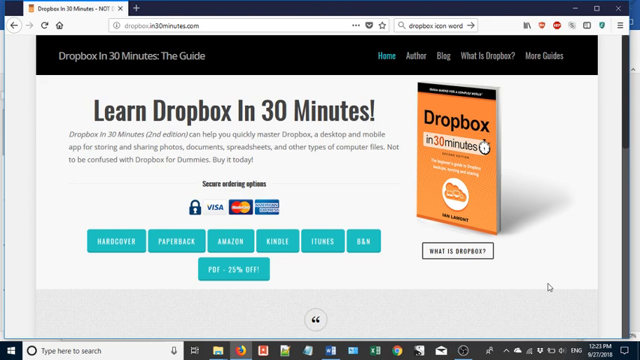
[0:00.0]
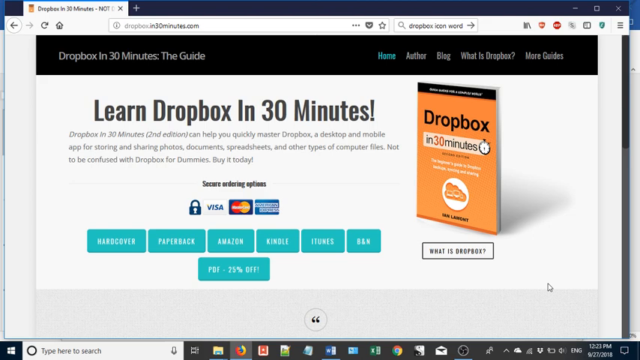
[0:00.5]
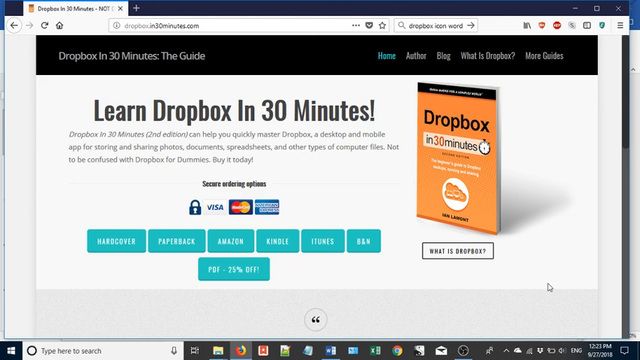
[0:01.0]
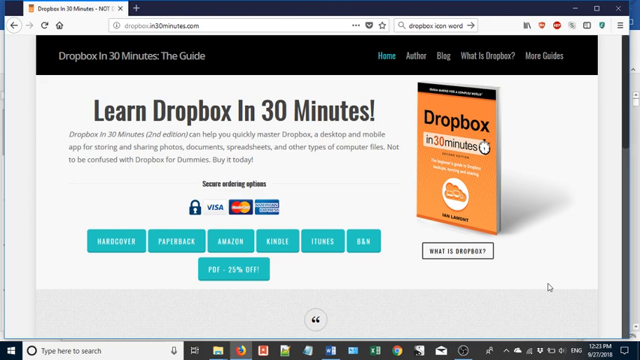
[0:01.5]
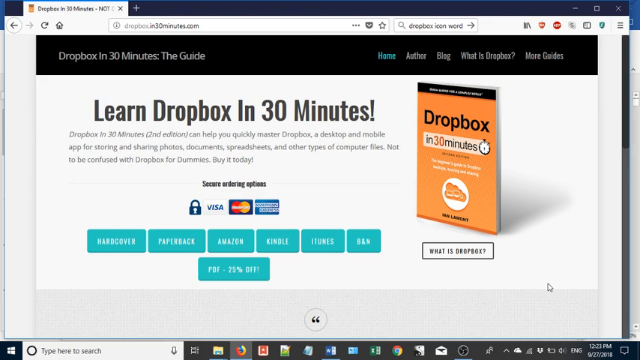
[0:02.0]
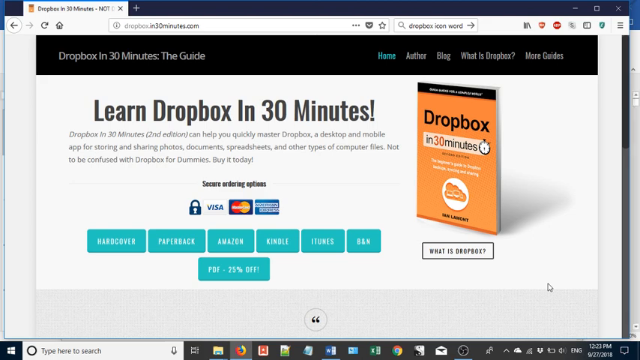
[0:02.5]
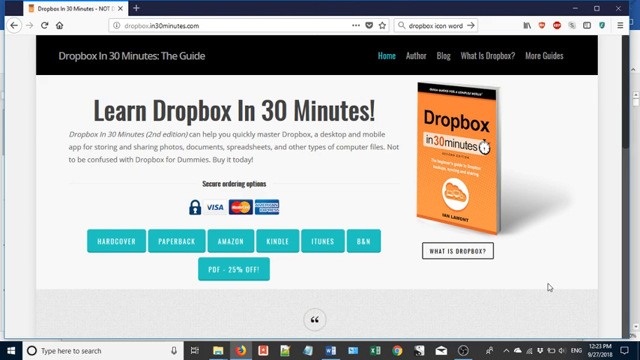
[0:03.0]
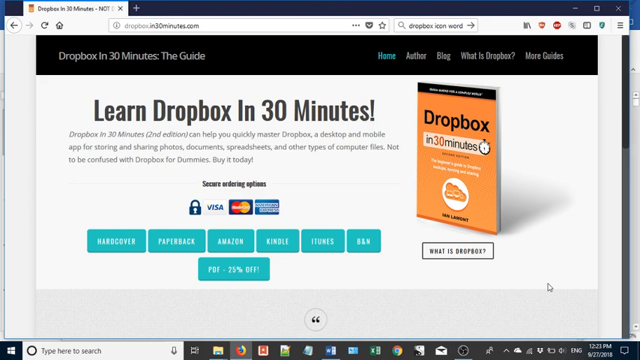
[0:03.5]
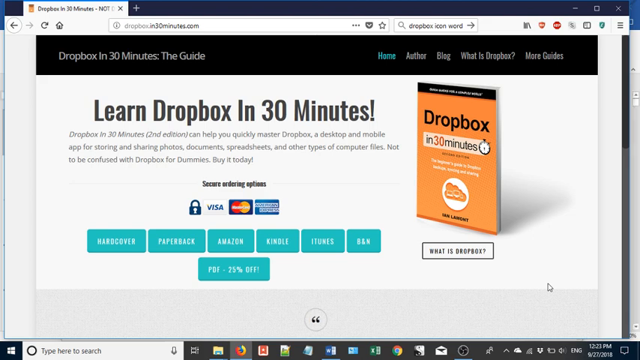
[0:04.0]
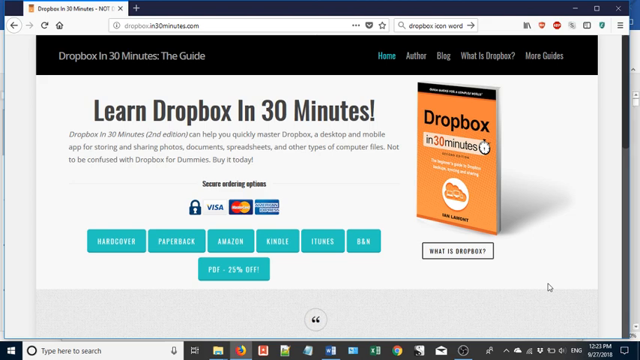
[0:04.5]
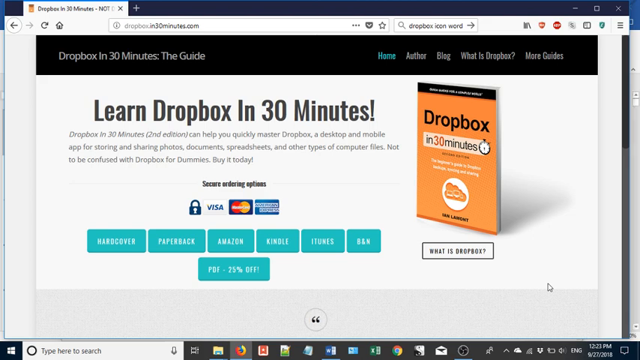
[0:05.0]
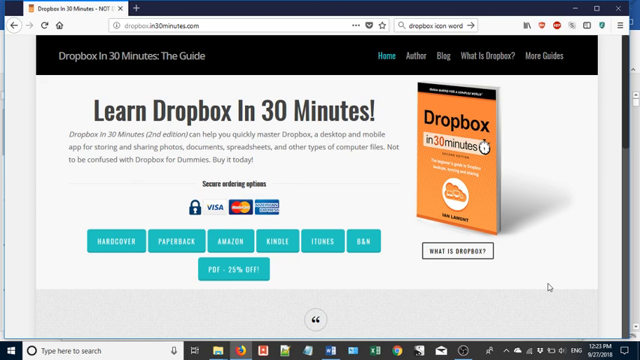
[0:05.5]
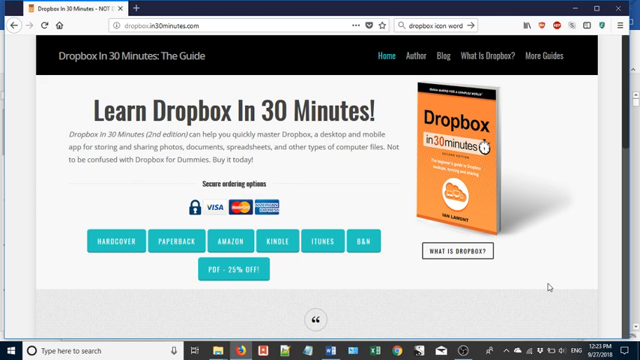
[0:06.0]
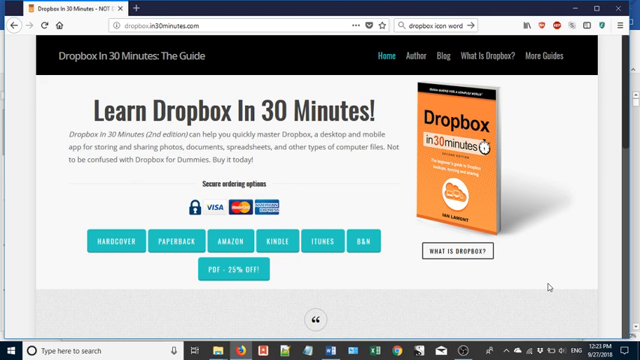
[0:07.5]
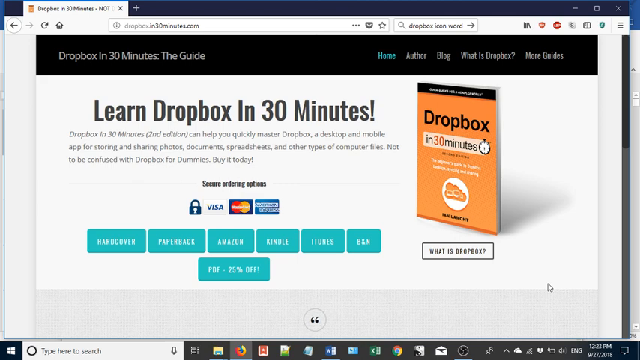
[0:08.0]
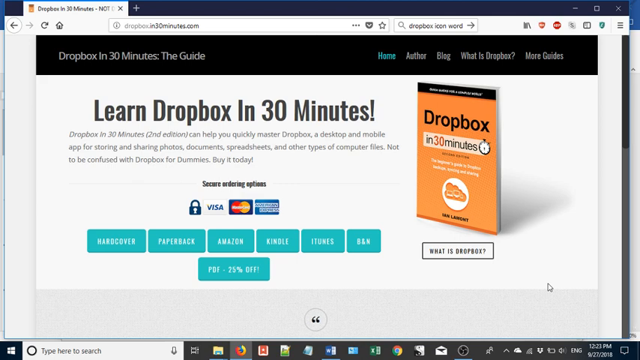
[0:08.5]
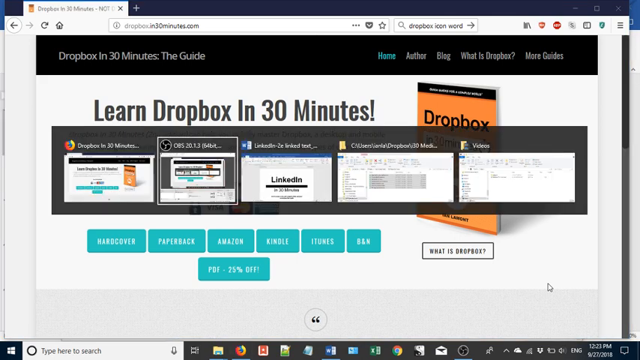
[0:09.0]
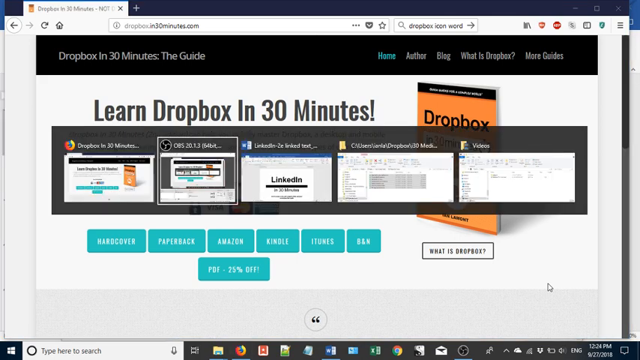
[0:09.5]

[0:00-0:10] A web page at the address dropboxin30minutes.com is displayed. At the top of the screen is a black bar with white letters reading "Dropbox in 30 minutes, a guide." To the right of that are "home" in green, then "author" in white, "blog," "what is Dropbox," and "more guides." Below, in large black letters, is "learn Dropbox in 30 minutes," and beneath that the text reads "Dropbox in 30 minutes, second edition, can help you quickly master Dropbox, a desktop and mobile app for storing and sharing photos, documents, spreadsheets, and other types of computer files. Not to be confused with Dropbox for dummies. Buy it today." To the right is the product, which has a black top and black lettering reading "Dropbox" and is orange in color.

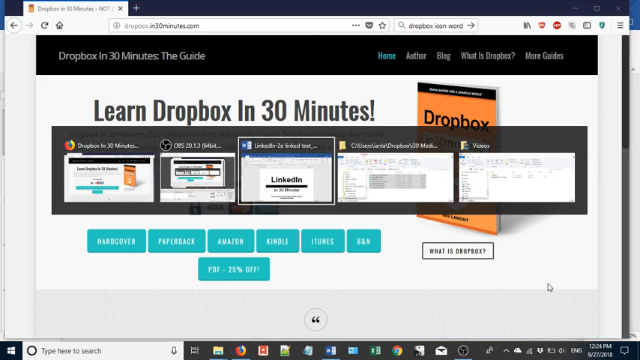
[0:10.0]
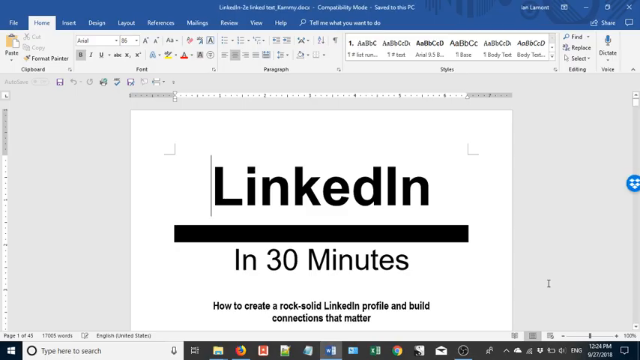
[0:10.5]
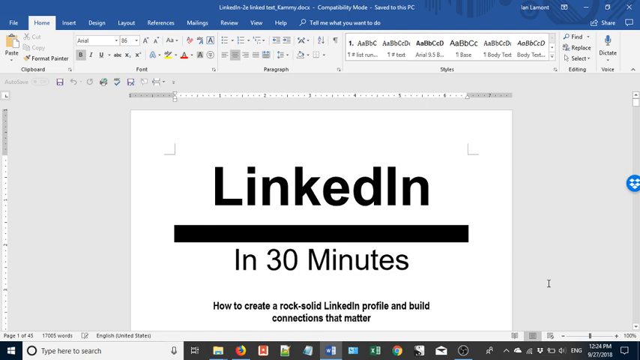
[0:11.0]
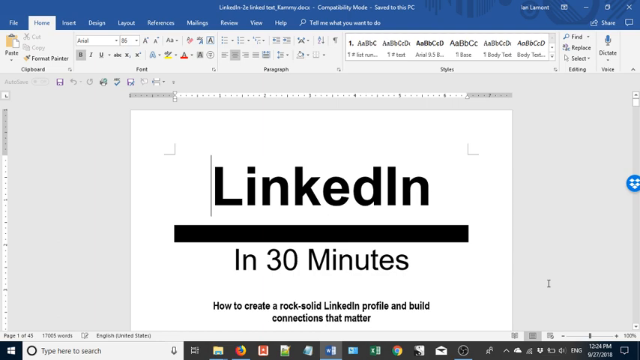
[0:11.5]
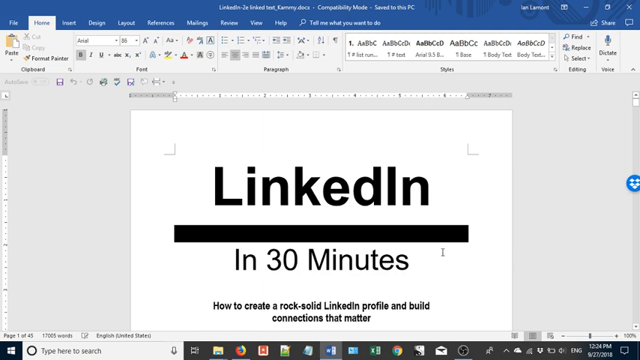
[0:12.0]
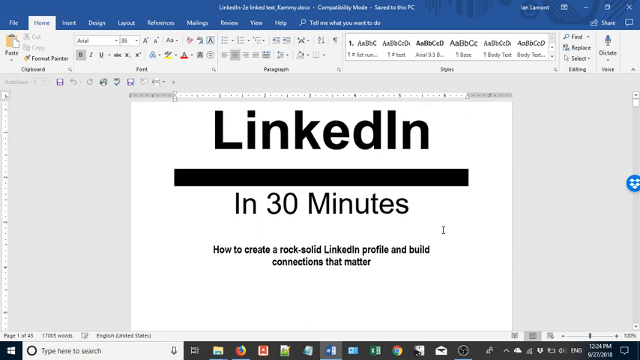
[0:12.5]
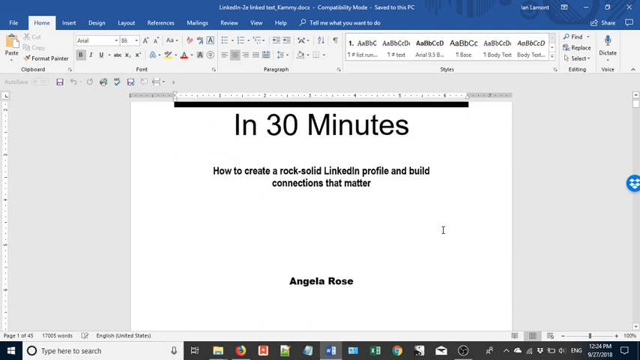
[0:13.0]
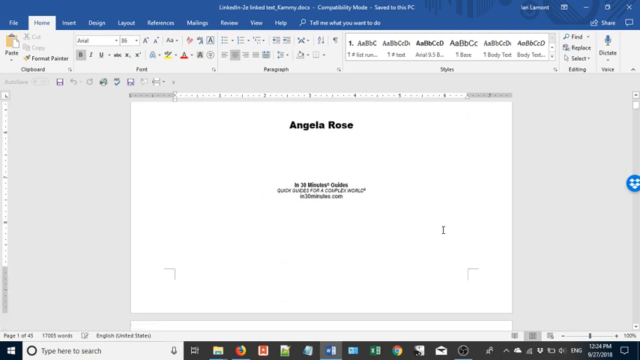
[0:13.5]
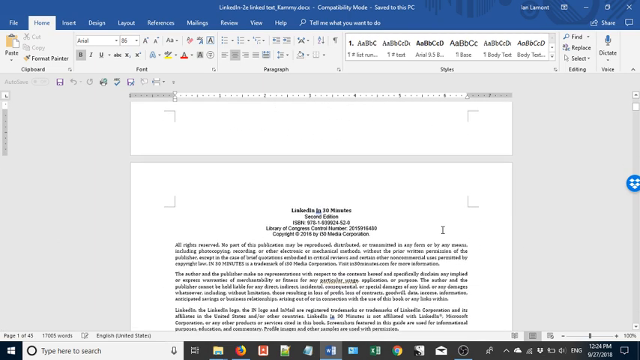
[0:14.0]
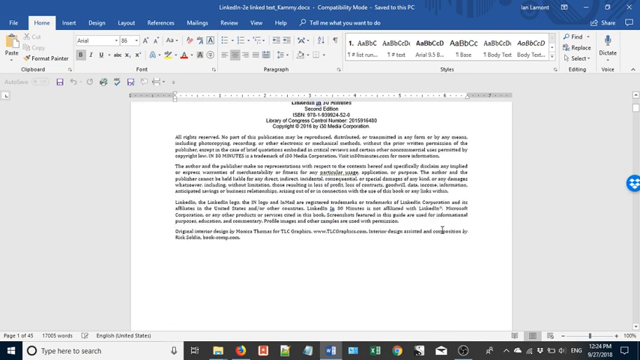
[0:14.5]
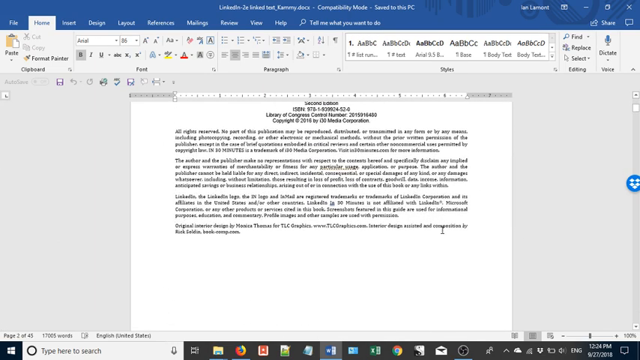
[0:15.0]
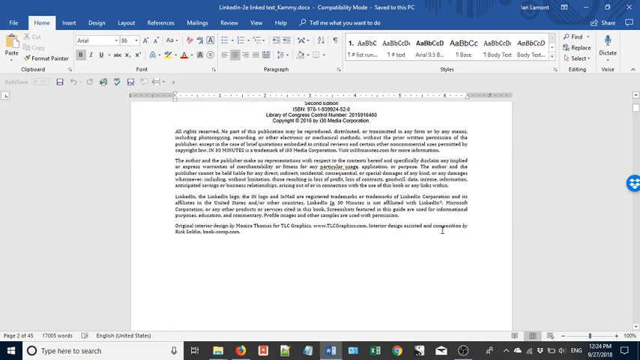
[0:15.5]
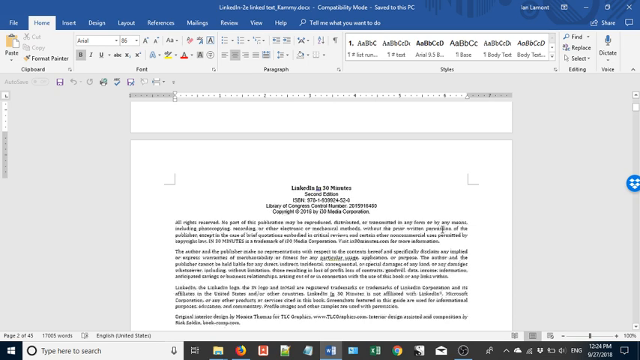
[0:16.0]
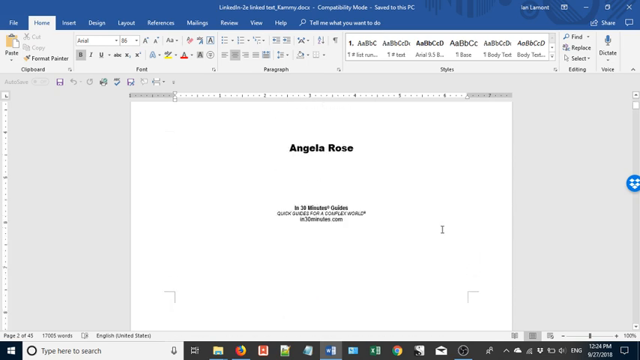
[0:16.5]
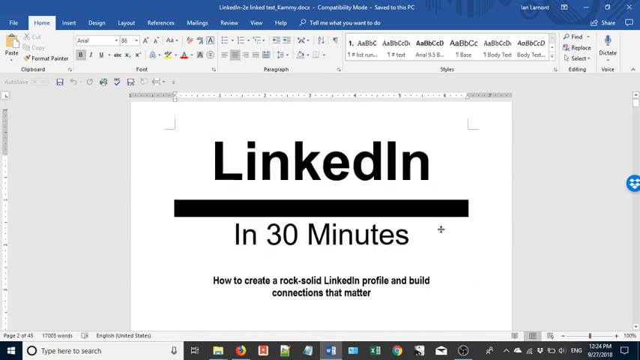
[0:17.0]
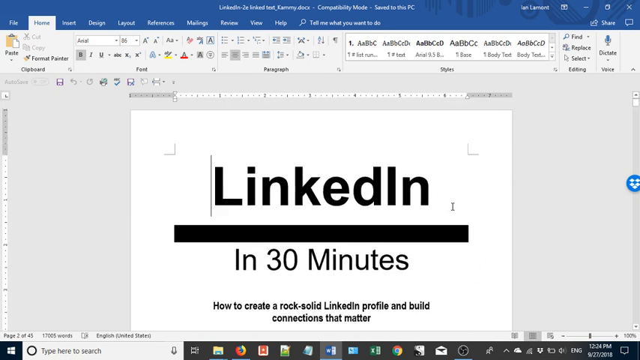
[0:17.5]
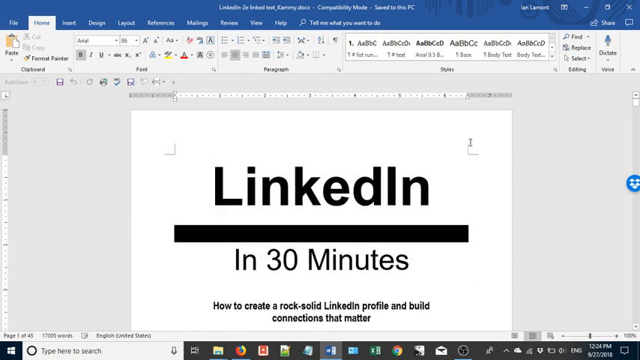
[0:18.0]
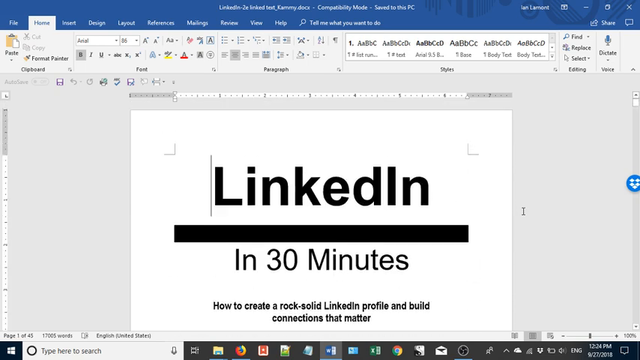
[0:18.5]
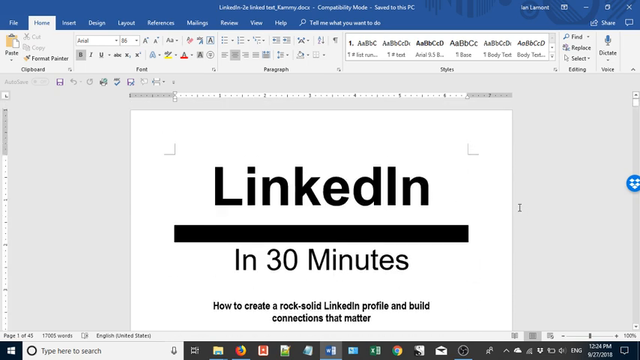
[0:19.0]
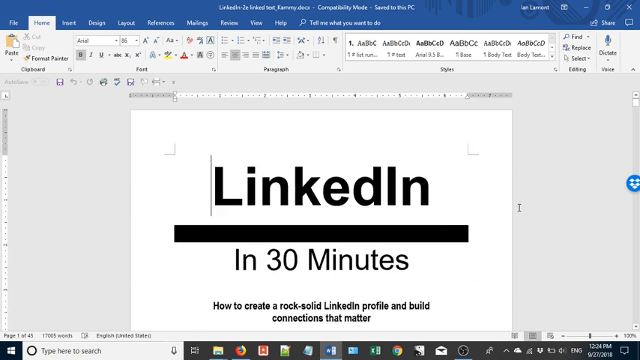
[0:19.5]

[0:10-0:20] The Dropbox in 30 Minutes webpage is shown. At the top is a black bar with white letters reading "Dropbox in 30 Minutes, the guide," and to the right of that are "Home" in green, then "Author" in white, "Blog," "What is Dropbox," and "More Guides." Beneath it, in large black letters, is "Learn Dropbox in 30 Minutes." Below that is a Firefox symbol with "Dropbox in 30 Minutes" on it, and in the middle is a LinkedIn. Underneath all of that, from left to right, are "hardcover" with a green background and white lettering, then "paperback," "Amazon," "Kindle," "iTunes," and "BNN." At the bottom is "PDF, 25% off."